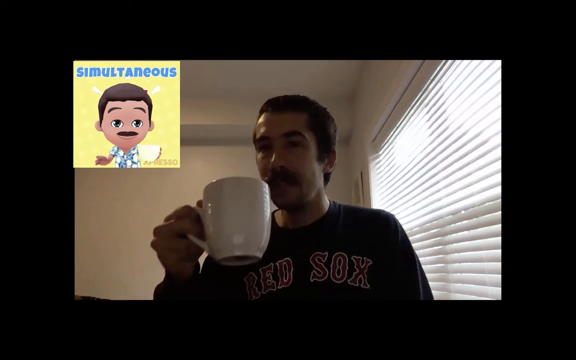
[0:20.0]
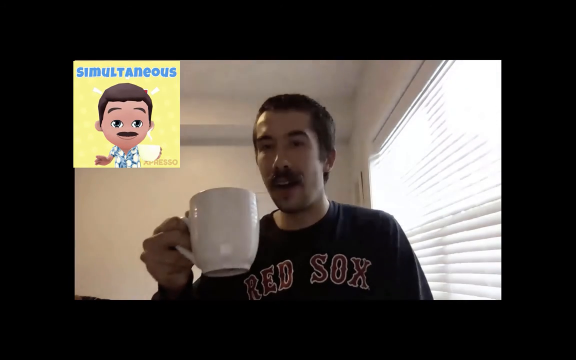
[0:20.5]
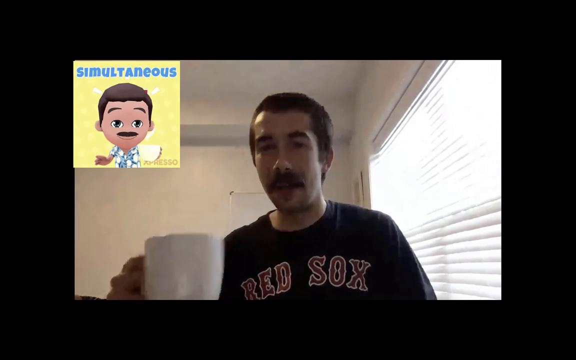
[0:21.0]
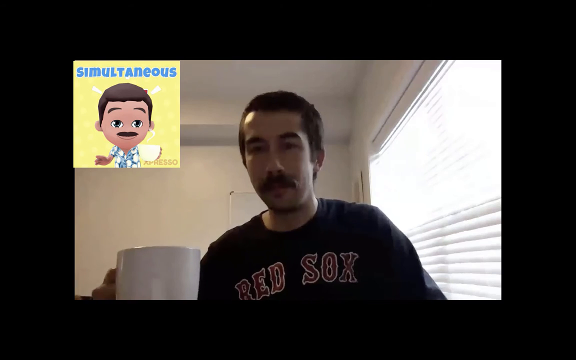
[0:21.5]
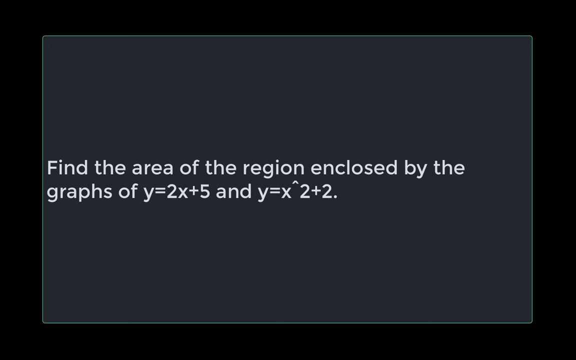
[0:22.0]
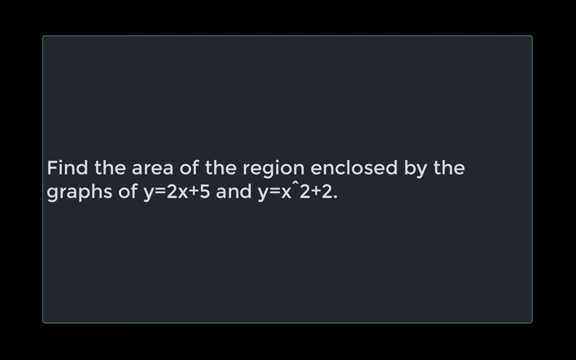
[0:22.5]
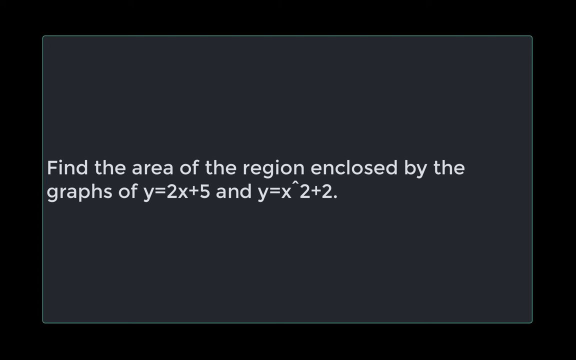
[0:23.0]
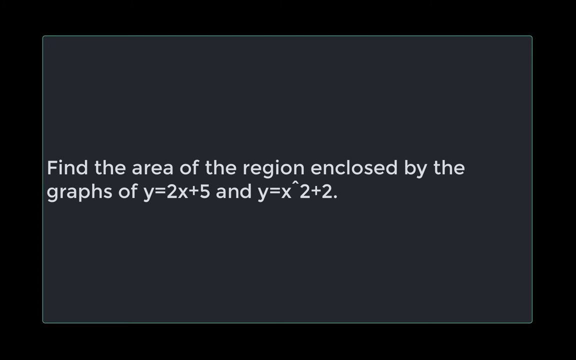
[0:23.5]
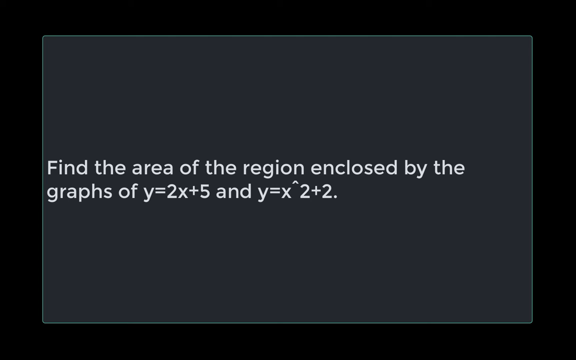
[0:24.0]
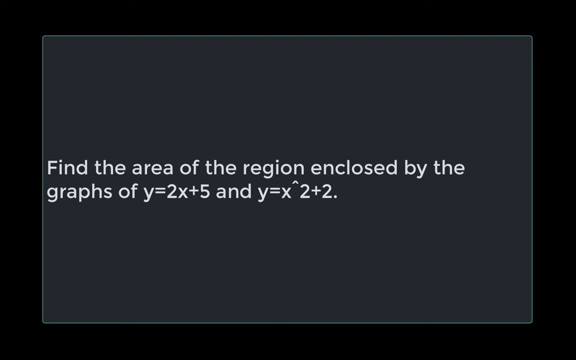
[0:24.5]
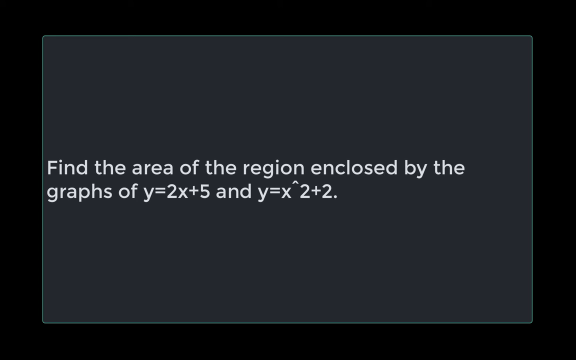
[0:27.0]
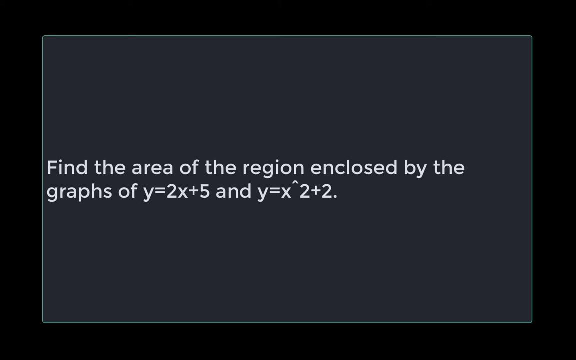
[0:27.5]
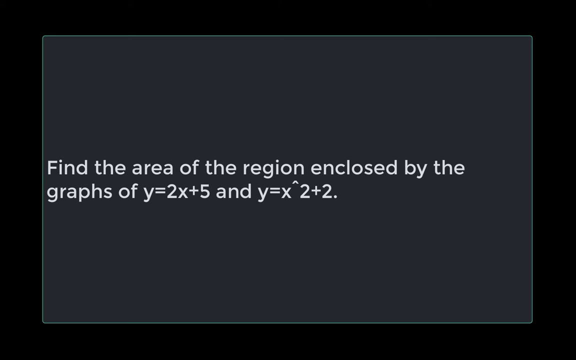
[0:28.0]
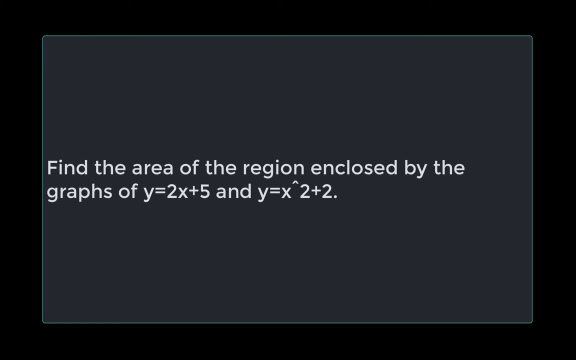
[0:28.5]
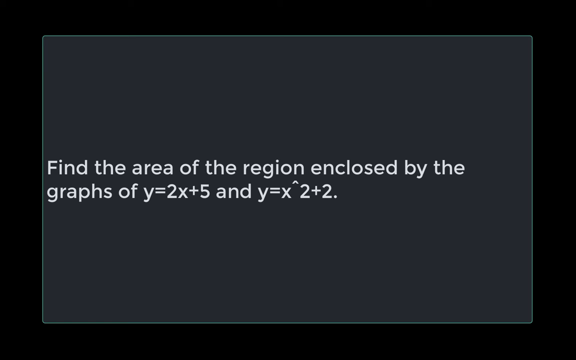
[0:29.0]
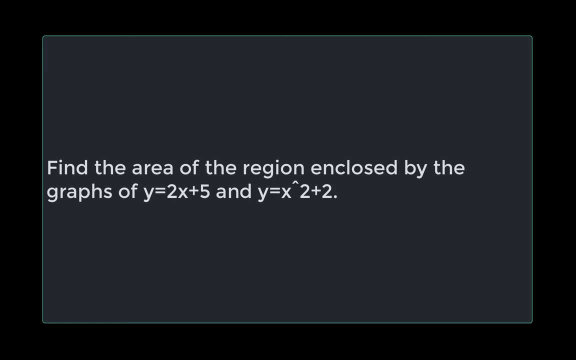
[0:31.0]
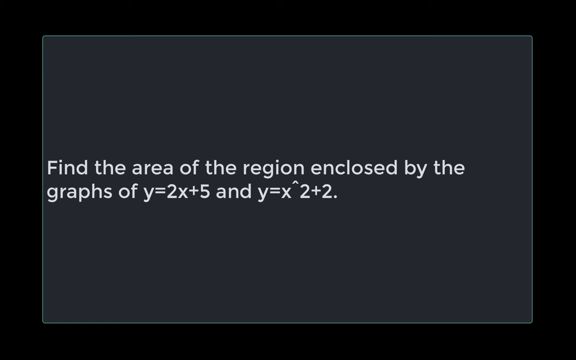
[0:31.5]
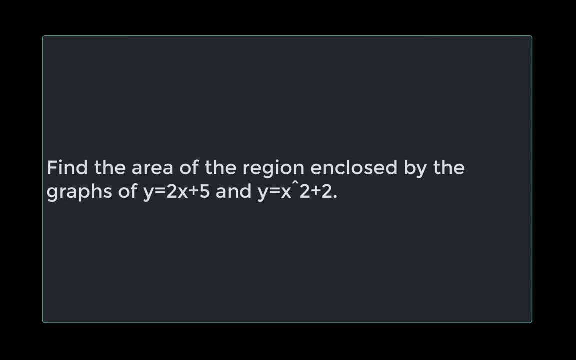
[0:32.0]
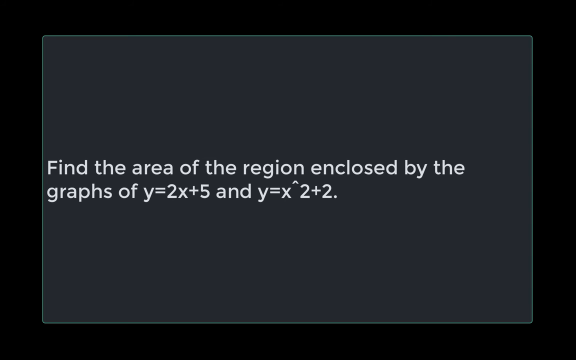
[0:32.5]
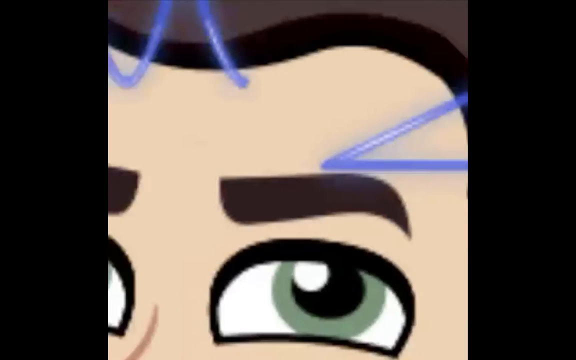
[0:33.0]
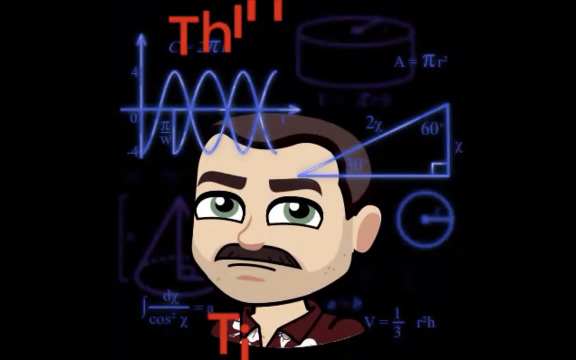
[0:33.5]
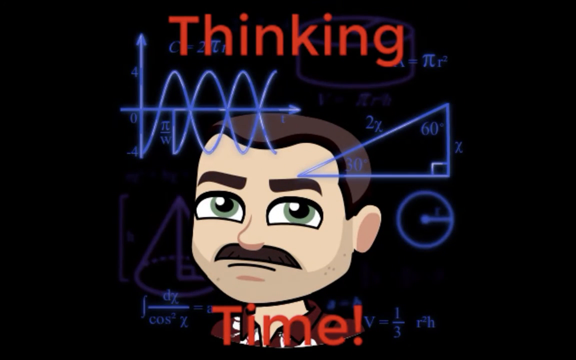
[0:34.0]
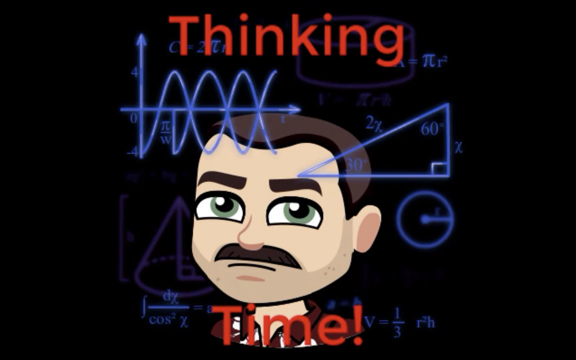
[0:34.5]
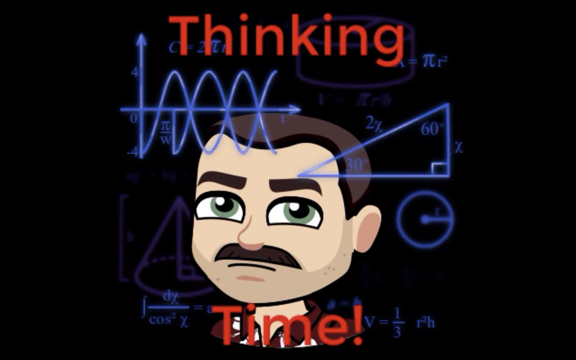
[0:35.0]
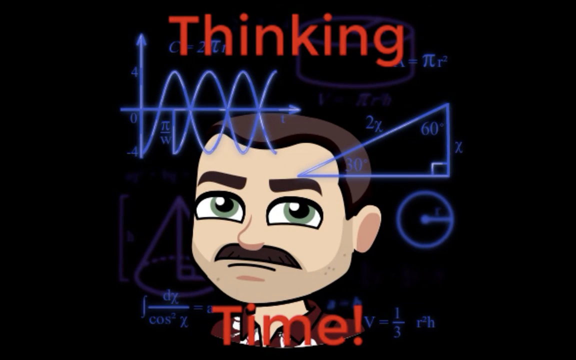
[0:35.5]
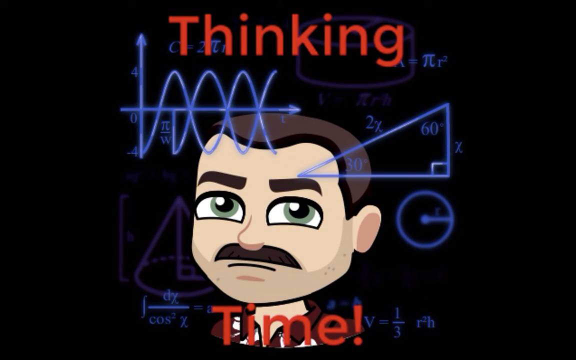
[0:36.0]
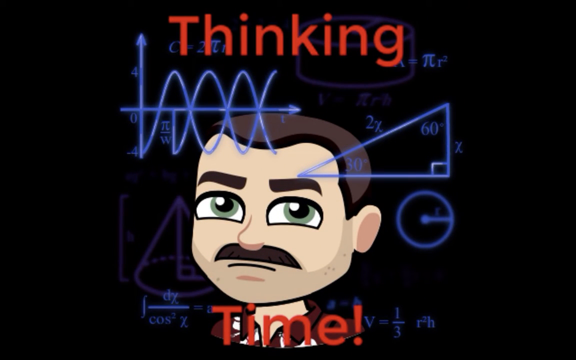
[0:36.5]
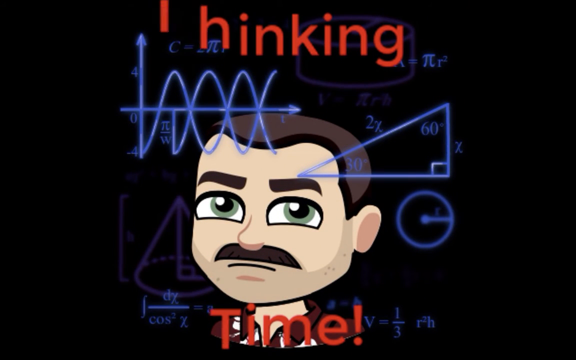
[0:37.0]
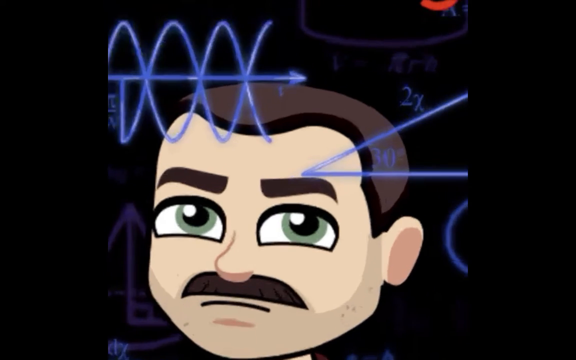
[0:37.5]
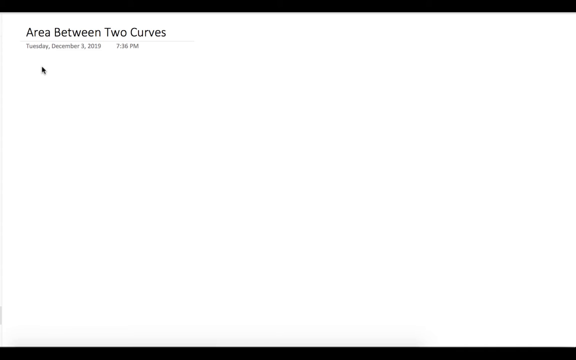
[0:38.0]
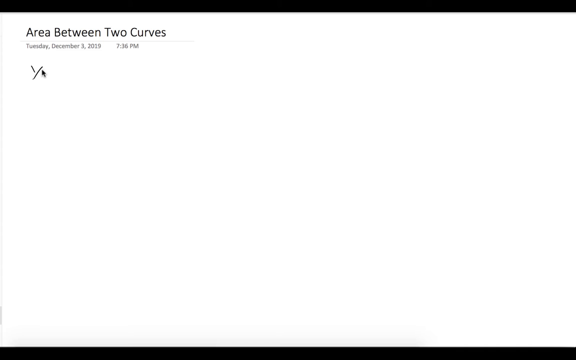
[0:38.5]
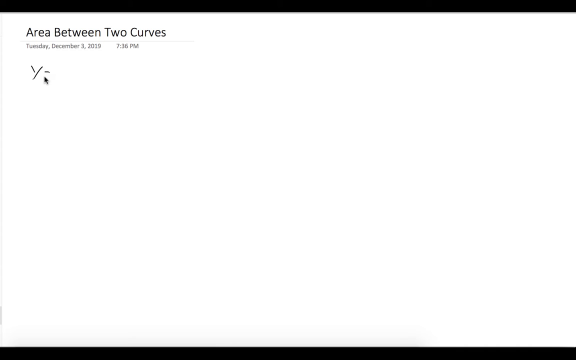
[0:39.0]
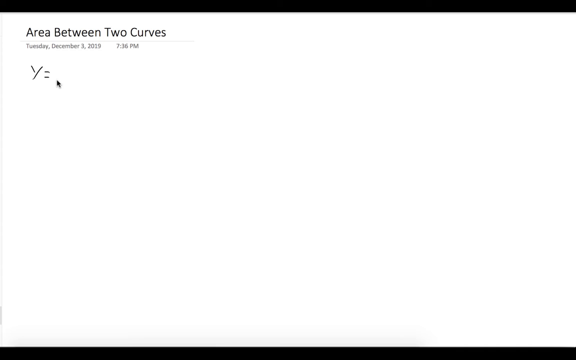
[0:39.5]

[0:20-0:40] He shows a math problem on screen that reads "find the area of the region enclosed by the graphs of y = 2x + 5 and y = x^2 + 2," apparently working through it as an example. The video then cuts to an edit with what looks like a Snapchat character looking up as if thinking very hard. Above him is the word "thinking" and below it "time," together reading "thinking time." All kinds of math symbols surround the character. The video then moves into an introduction to the calculus example that Dr. Wesselcouch is going to solve.